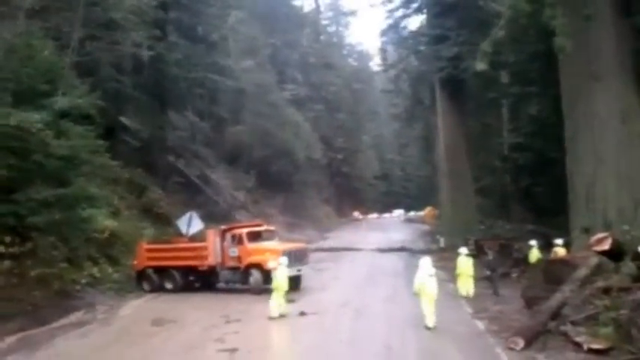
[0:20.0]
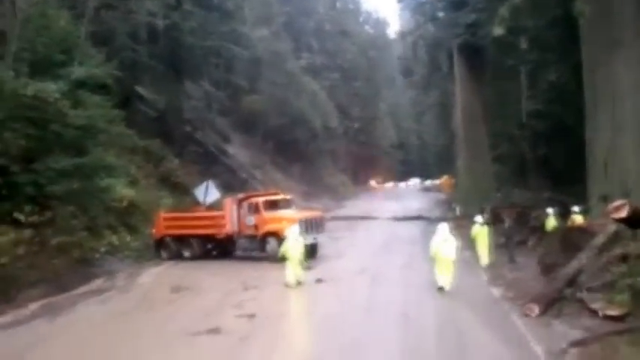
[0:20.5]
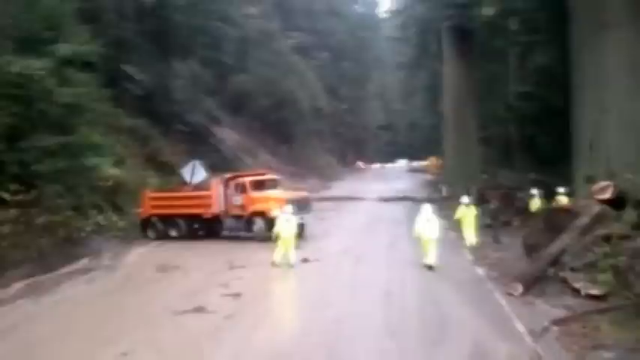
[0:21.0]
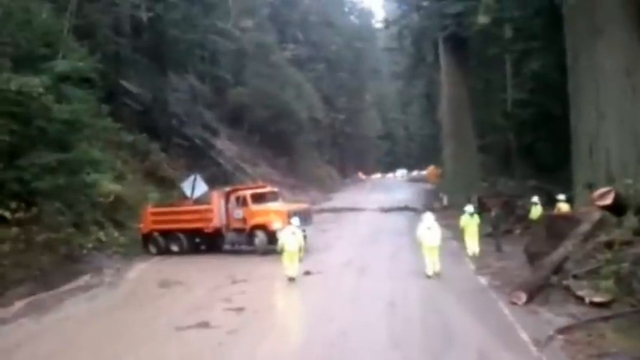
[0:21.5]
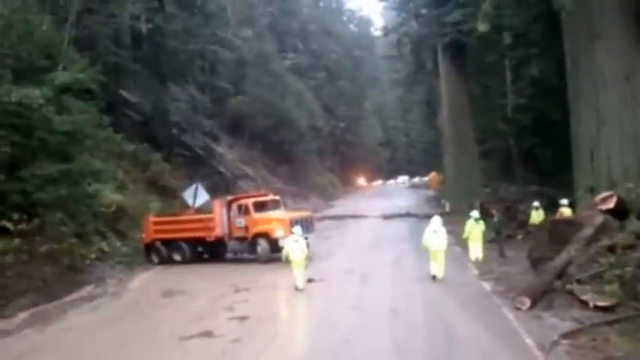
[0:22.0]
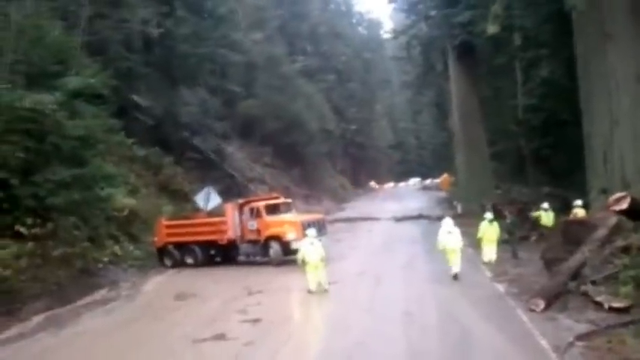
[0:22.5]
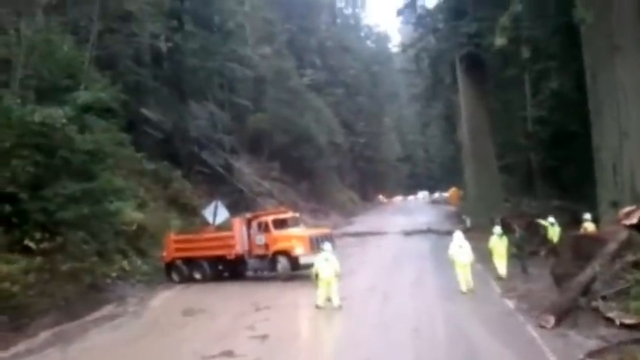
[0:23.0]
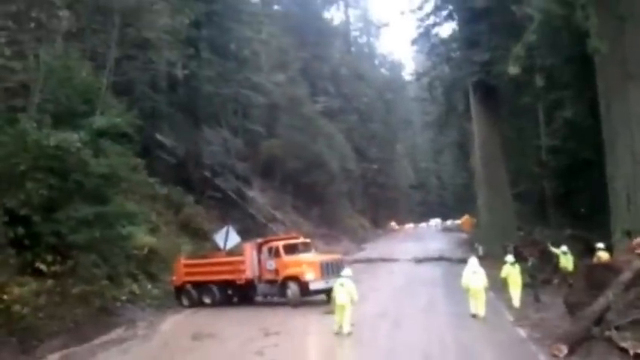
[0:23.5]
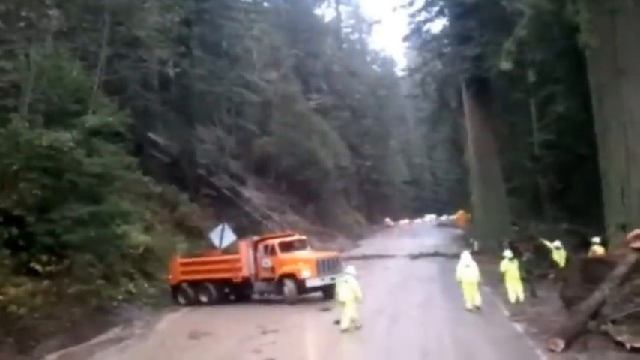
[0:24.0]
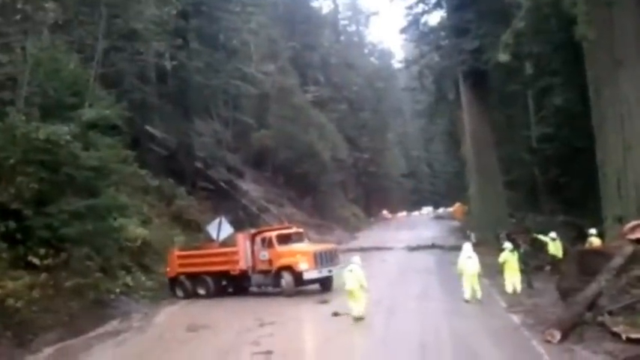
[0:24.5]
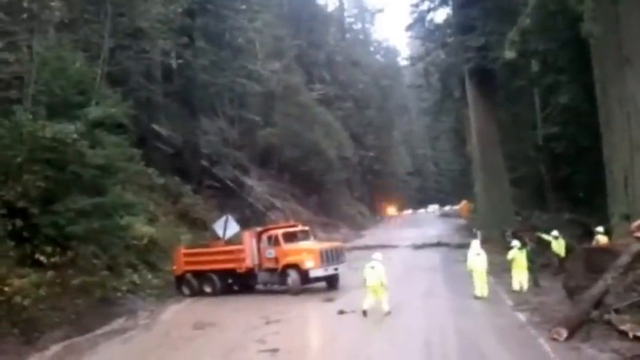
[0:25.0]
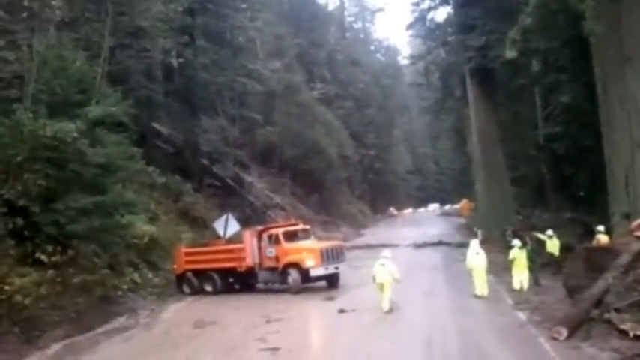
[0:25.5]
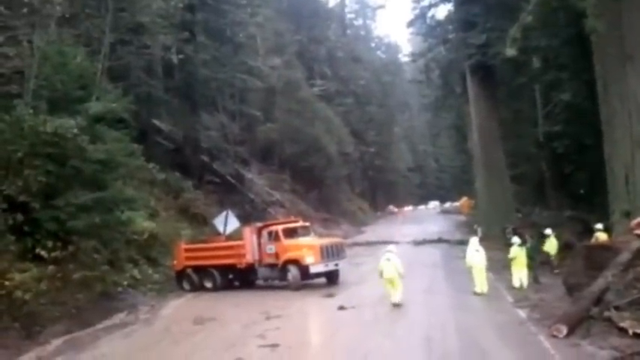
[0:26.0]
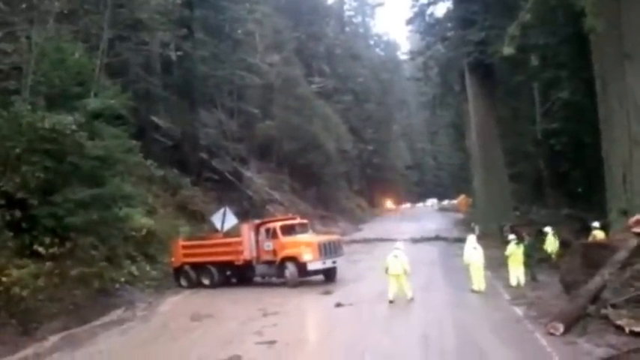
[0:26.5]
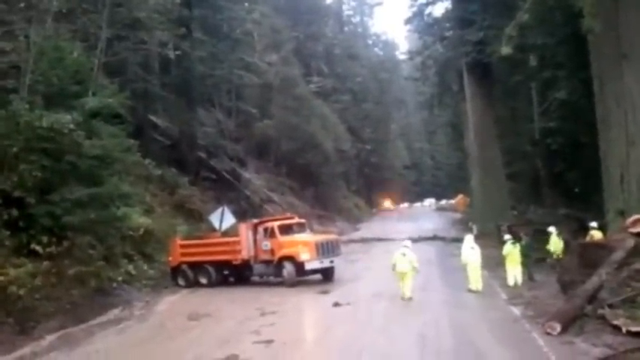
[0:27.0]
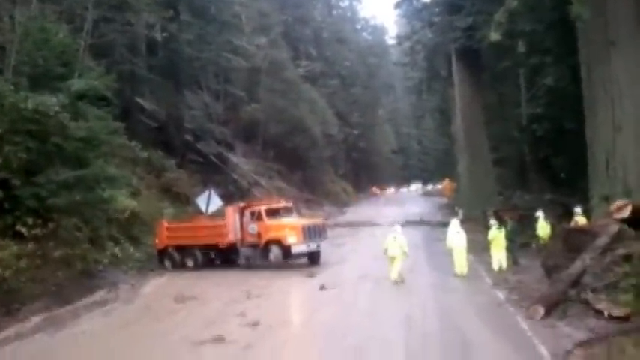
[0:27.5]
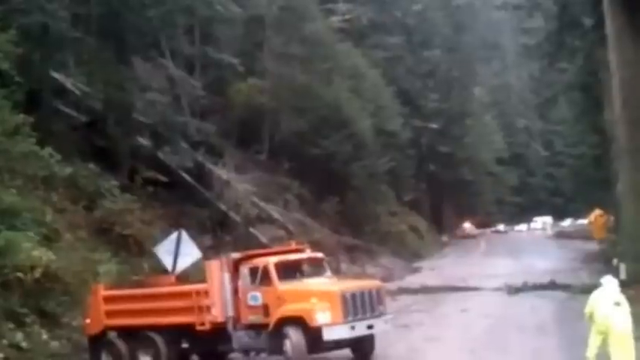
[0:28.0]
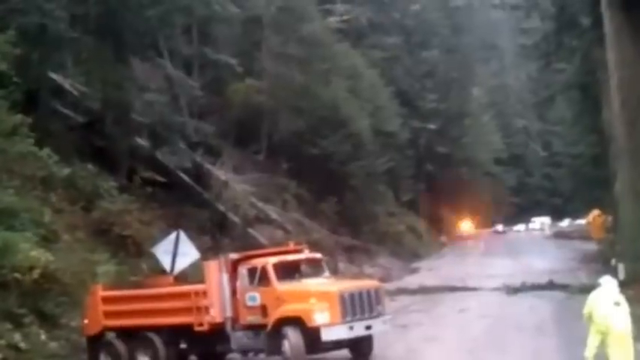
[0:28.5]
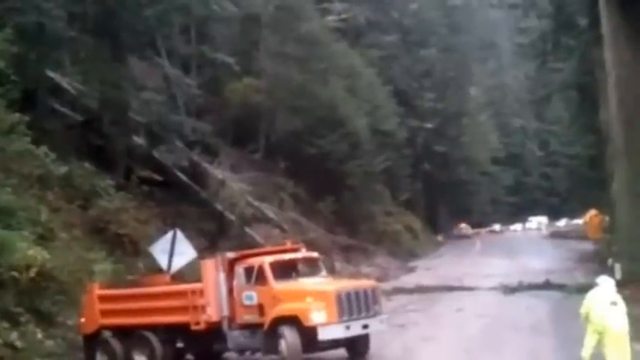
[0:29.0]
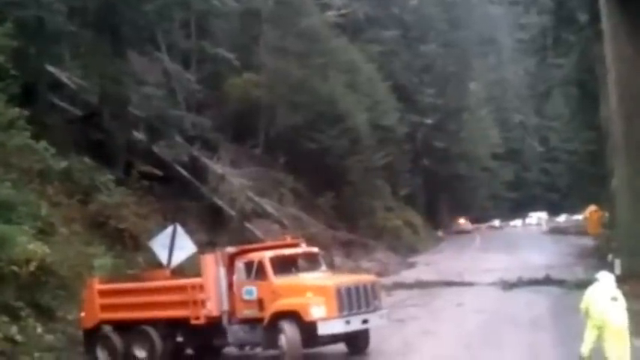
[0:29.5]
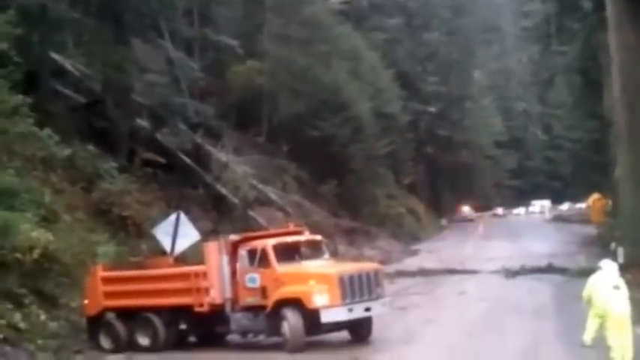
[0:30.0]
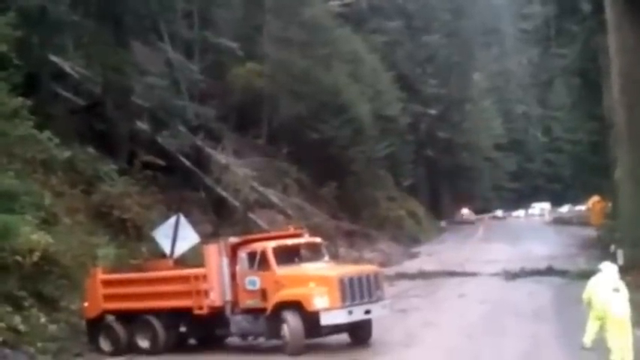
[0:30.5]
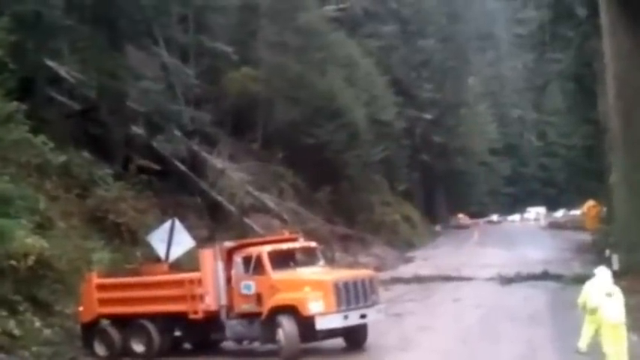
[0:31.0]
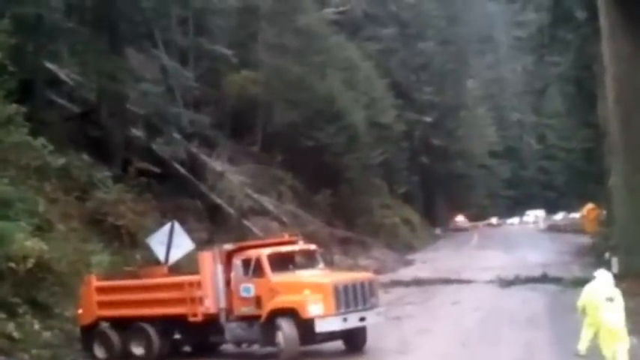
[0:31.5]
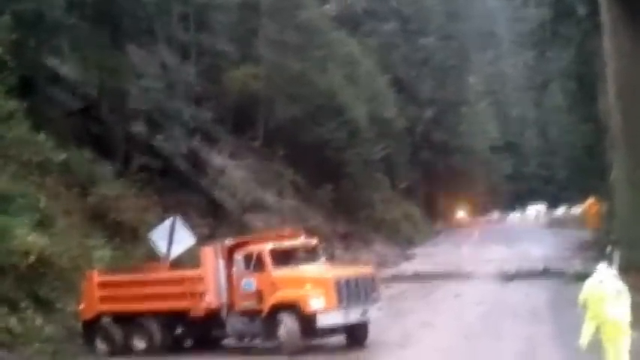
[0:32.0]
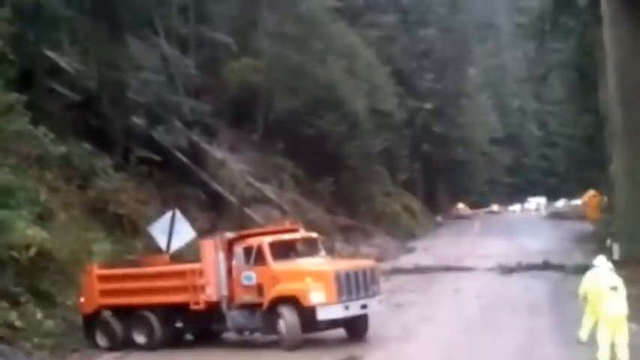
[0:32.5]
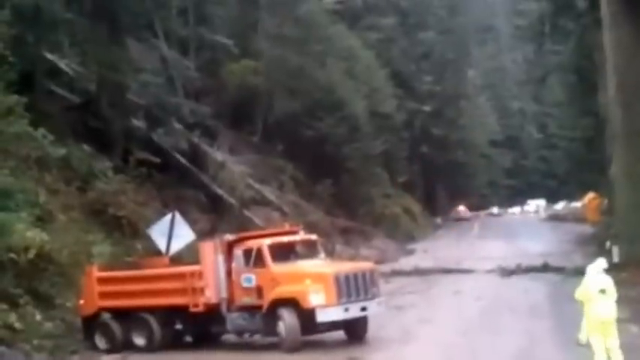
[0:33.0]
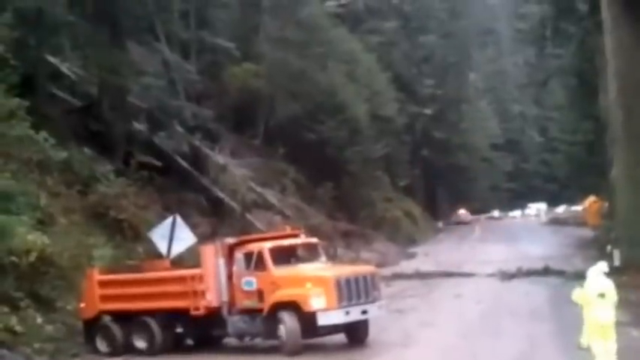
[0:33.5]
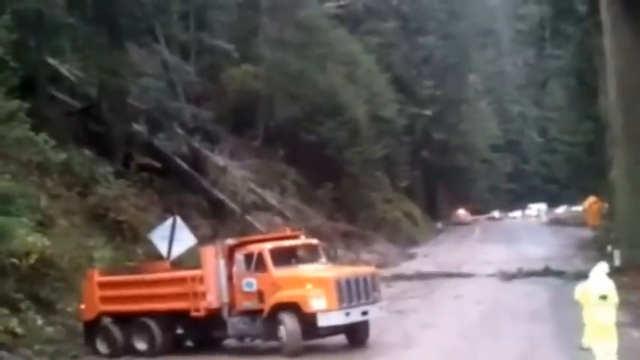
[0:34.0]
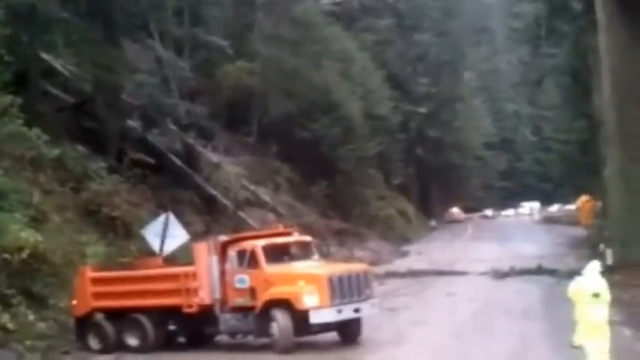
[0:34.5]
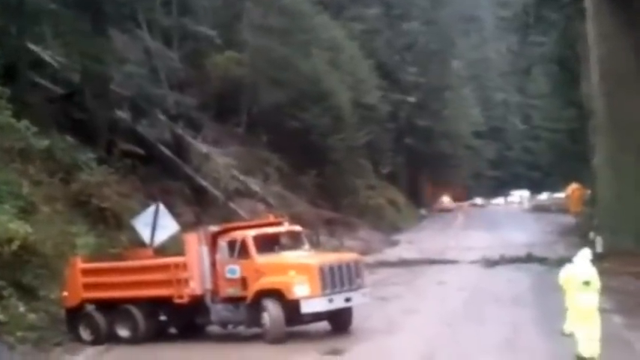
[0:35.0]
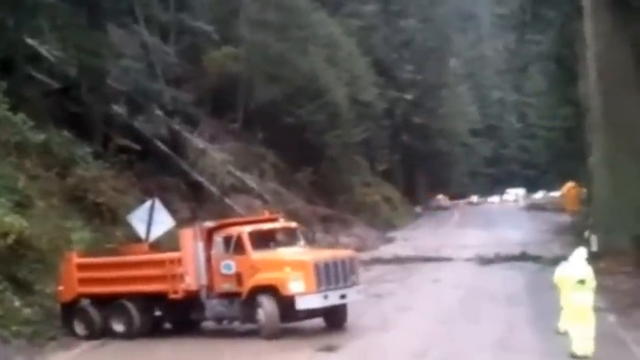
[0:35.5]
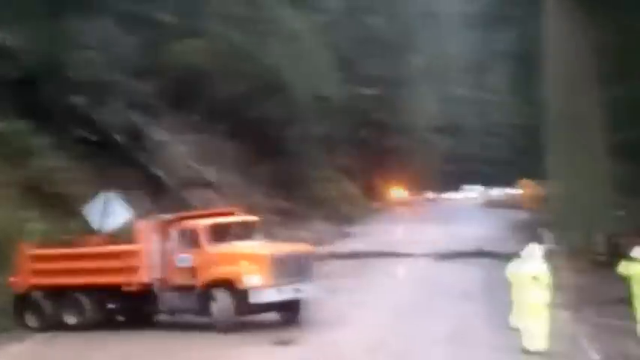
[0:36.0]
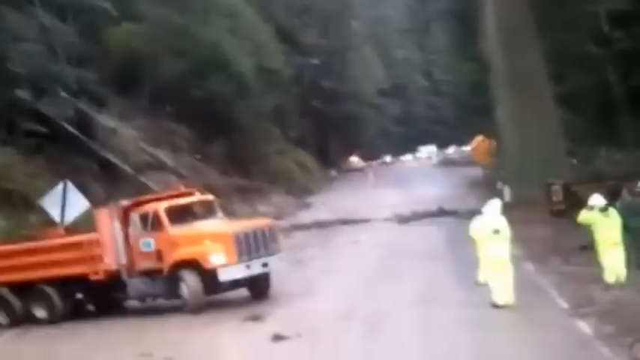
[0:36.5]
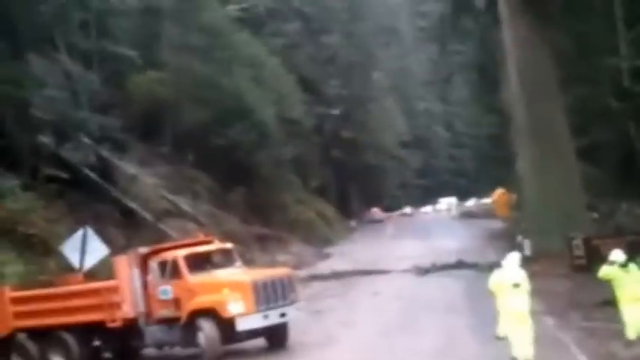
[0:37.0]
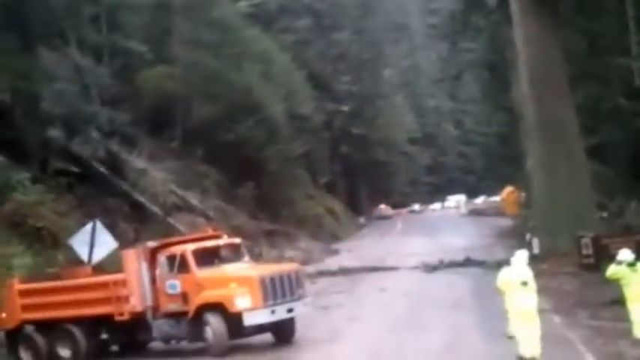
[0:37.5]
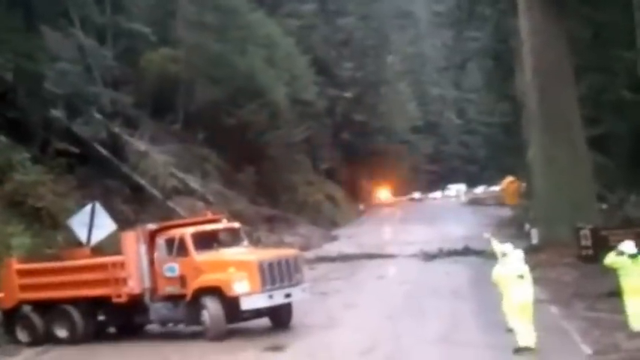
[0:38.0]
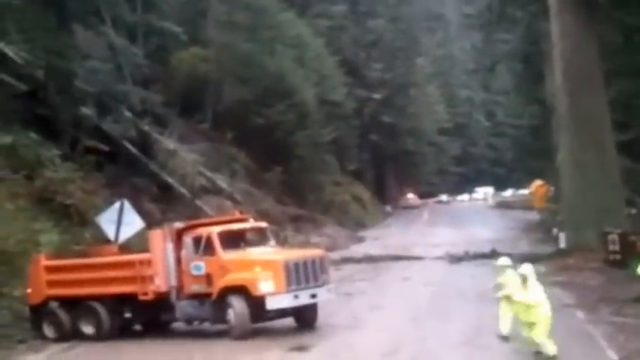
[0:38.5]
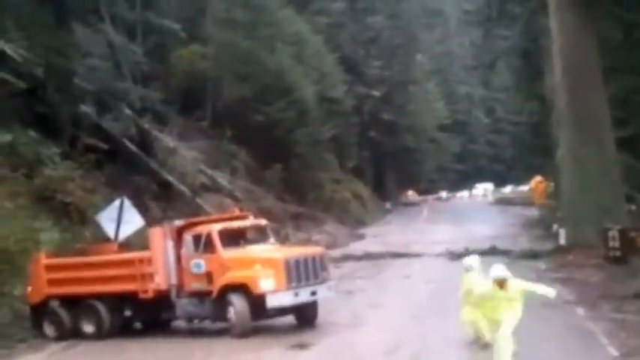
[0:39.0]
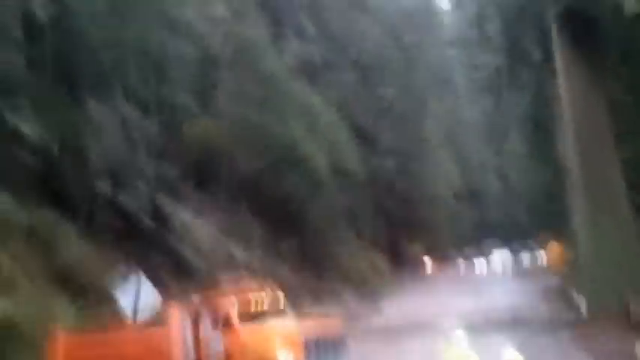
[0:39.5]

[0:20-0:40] Five people in all-yellow protective jumpsuits and white helmets stand across from a parked orange truck, chatting. A broken street sign is held at the back of the truck. Down the street, the road is closed off by cars with their lights on. A few feet from the truck, part of a tree has already fallen, and stacks of other tree parts are behind the group. Two of the people stay put, standing next to a tree, while two others run off once they notice a tree about to collapse onto the road.